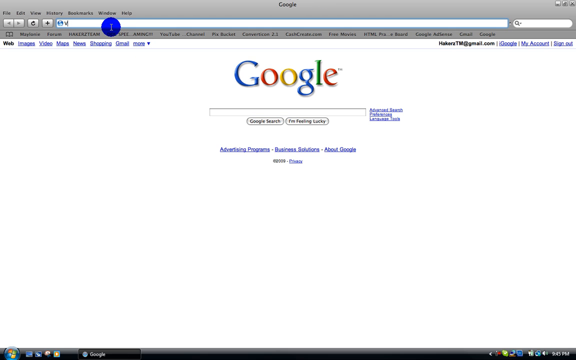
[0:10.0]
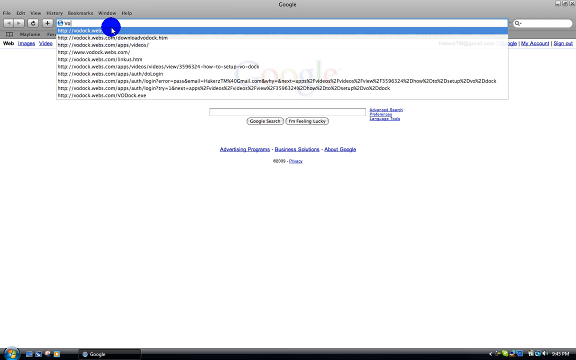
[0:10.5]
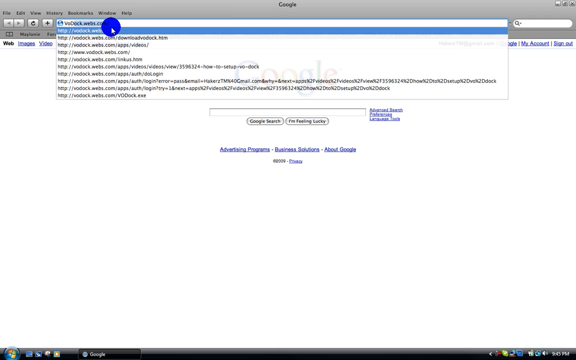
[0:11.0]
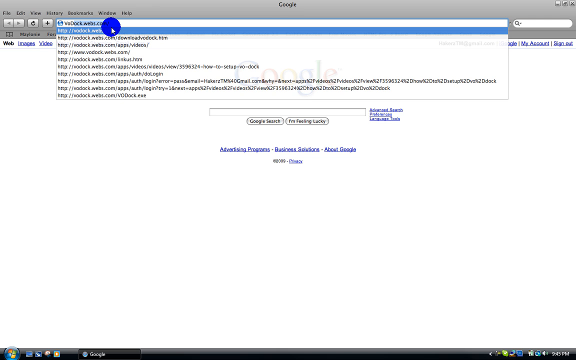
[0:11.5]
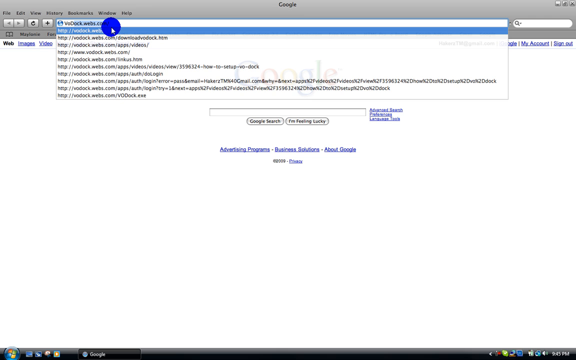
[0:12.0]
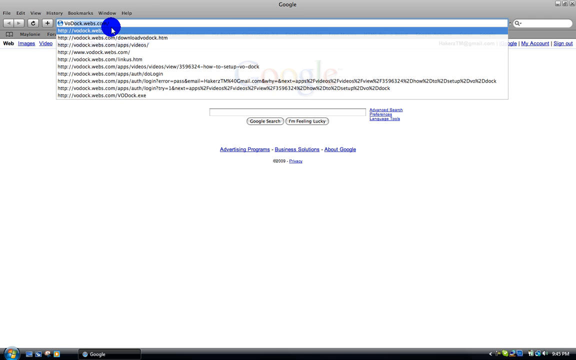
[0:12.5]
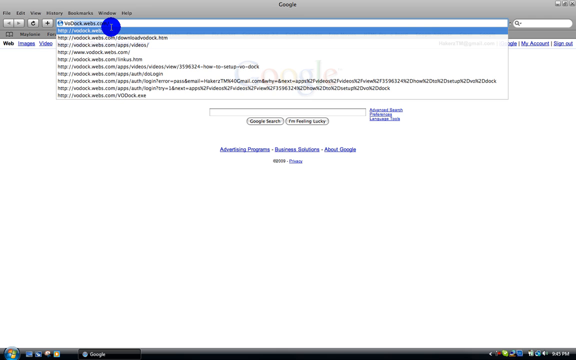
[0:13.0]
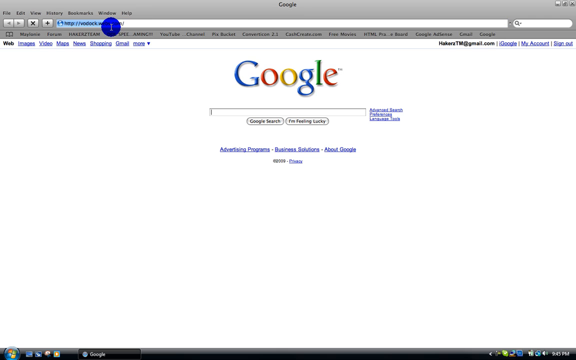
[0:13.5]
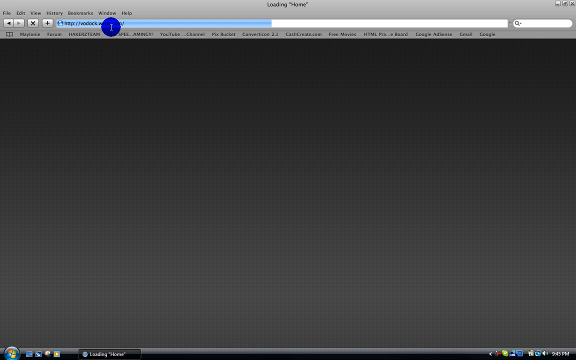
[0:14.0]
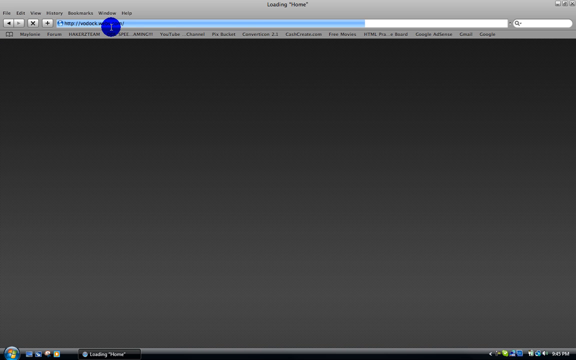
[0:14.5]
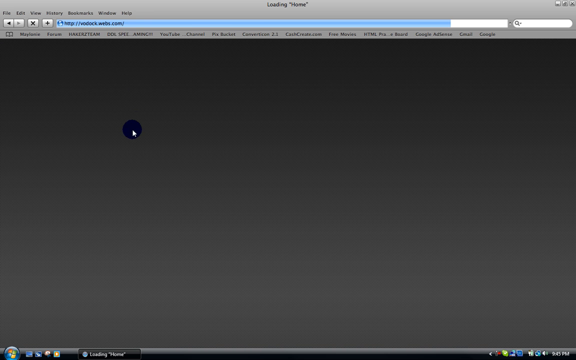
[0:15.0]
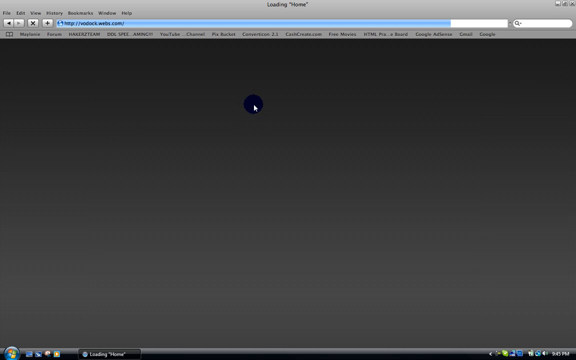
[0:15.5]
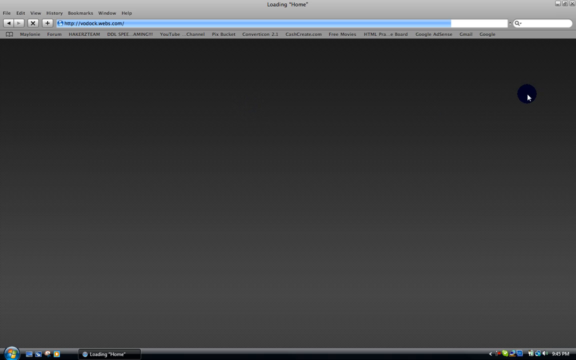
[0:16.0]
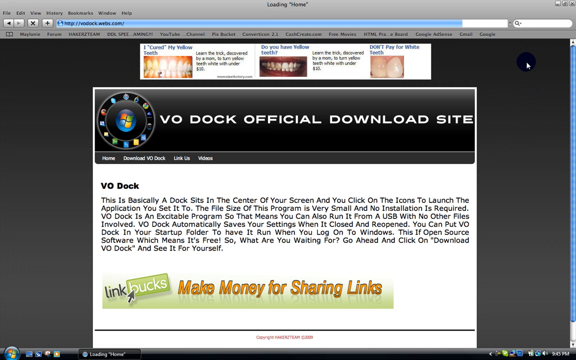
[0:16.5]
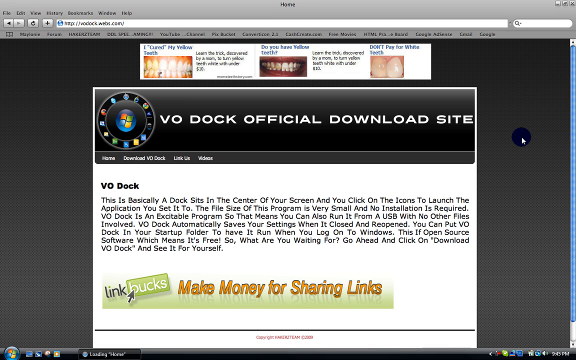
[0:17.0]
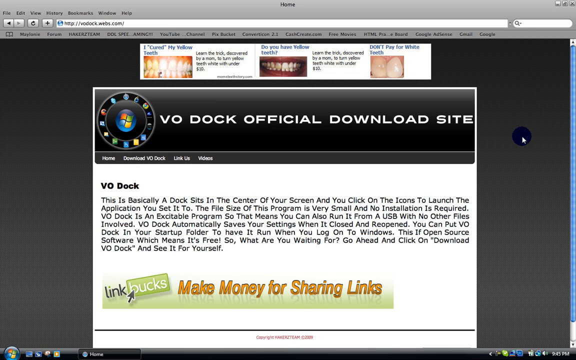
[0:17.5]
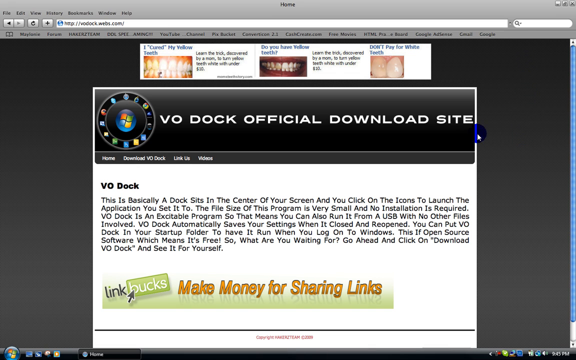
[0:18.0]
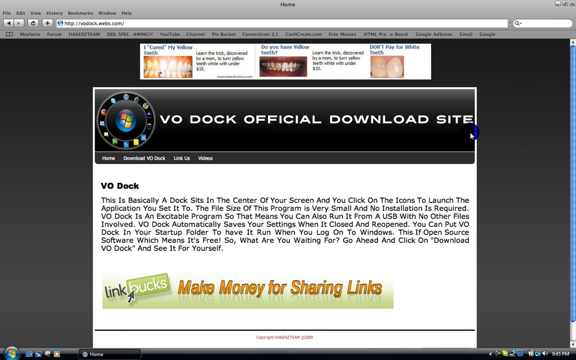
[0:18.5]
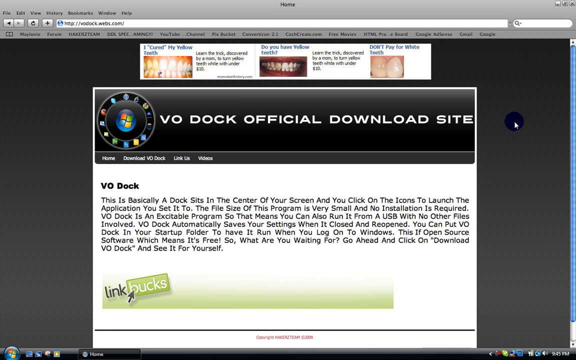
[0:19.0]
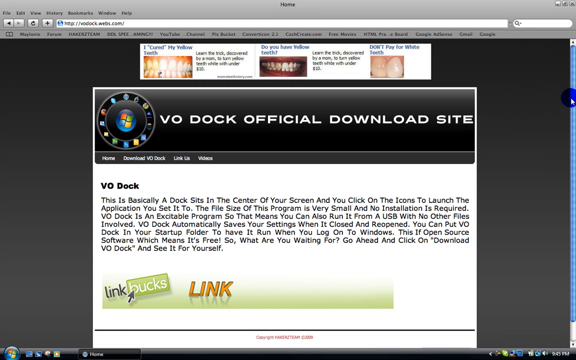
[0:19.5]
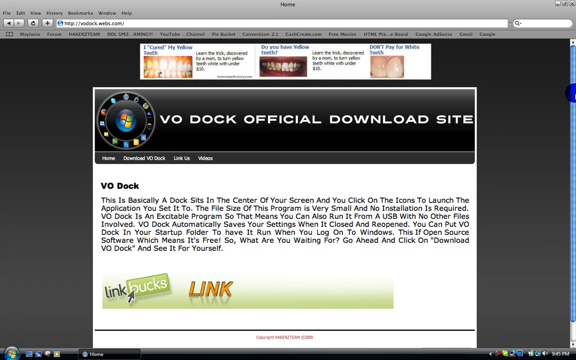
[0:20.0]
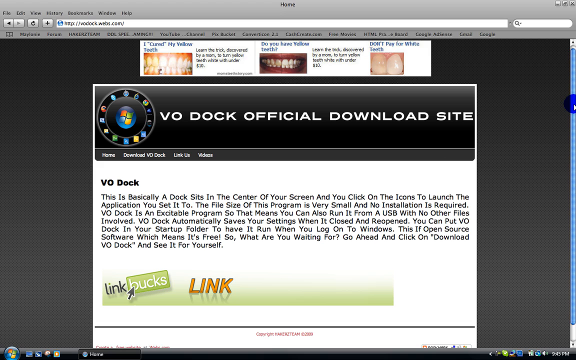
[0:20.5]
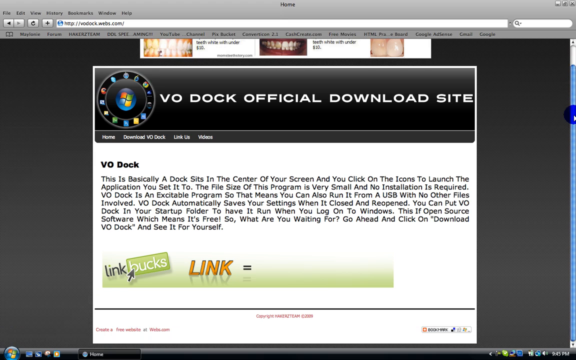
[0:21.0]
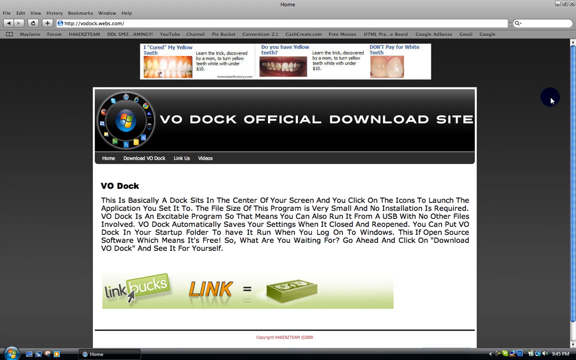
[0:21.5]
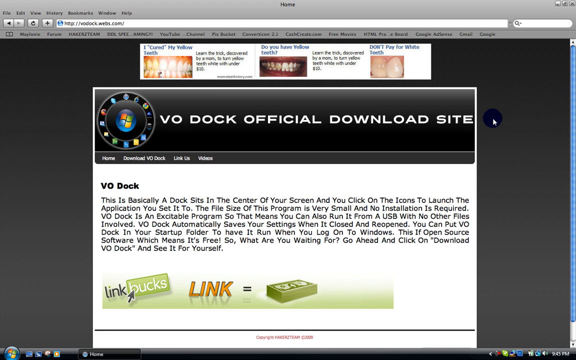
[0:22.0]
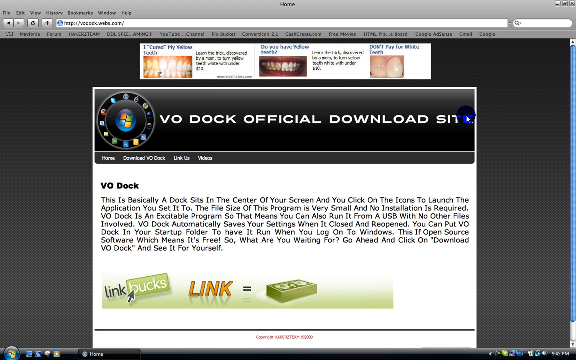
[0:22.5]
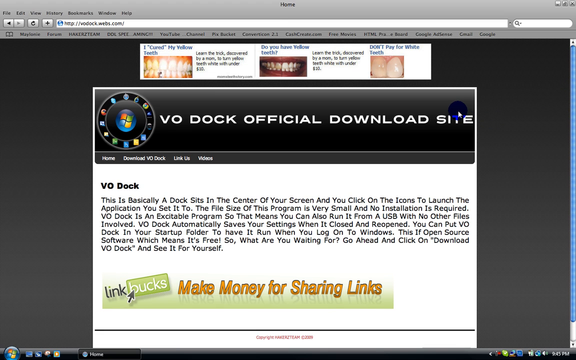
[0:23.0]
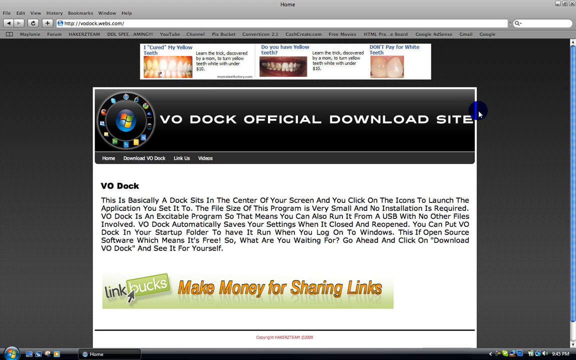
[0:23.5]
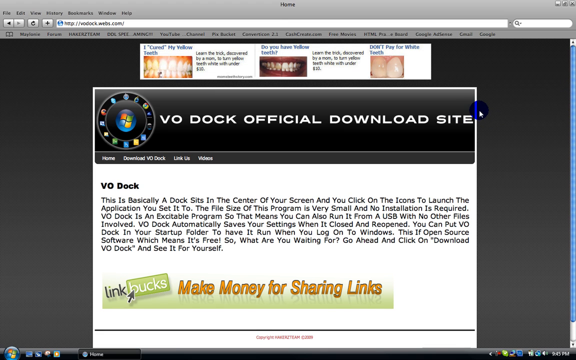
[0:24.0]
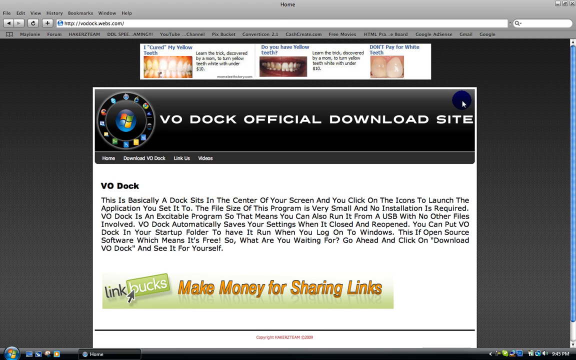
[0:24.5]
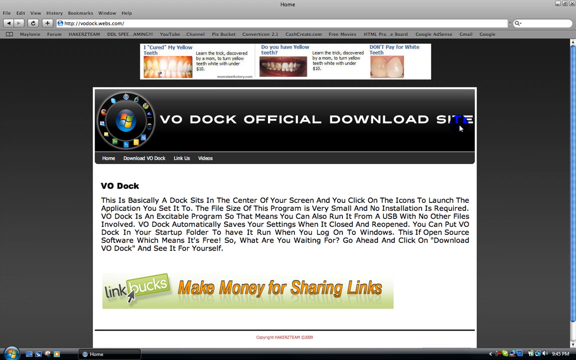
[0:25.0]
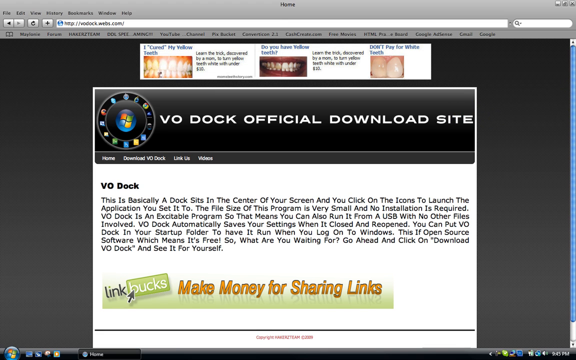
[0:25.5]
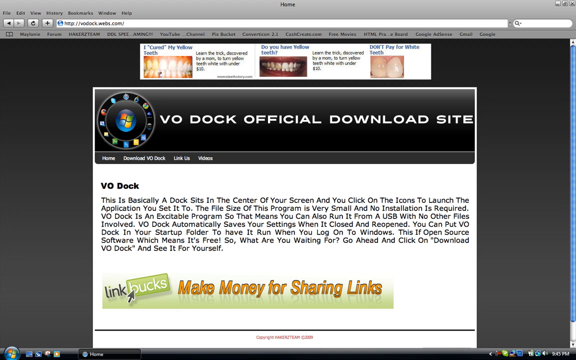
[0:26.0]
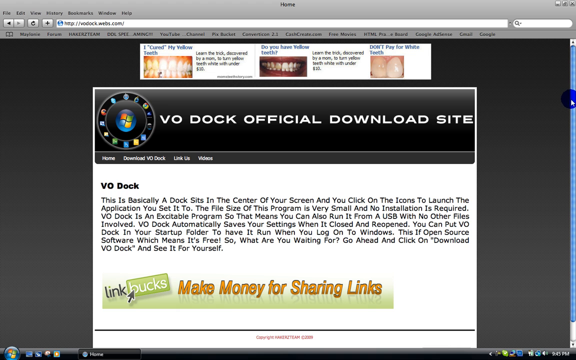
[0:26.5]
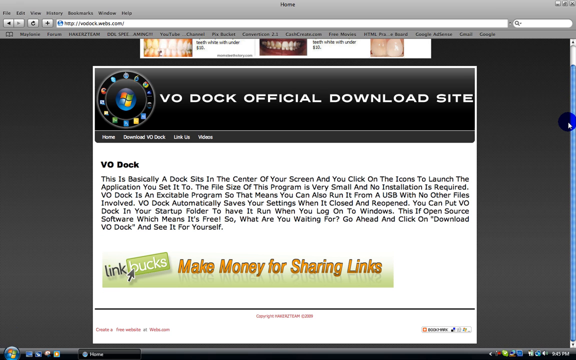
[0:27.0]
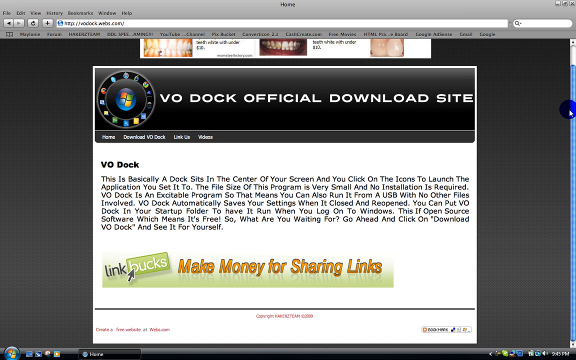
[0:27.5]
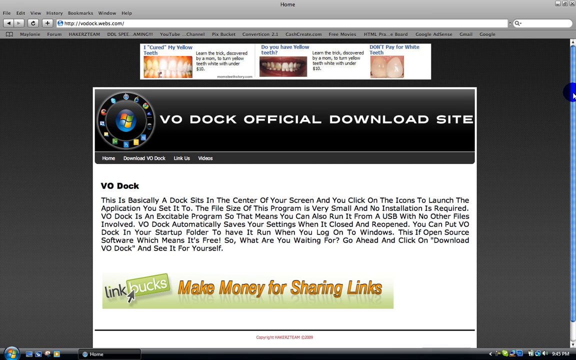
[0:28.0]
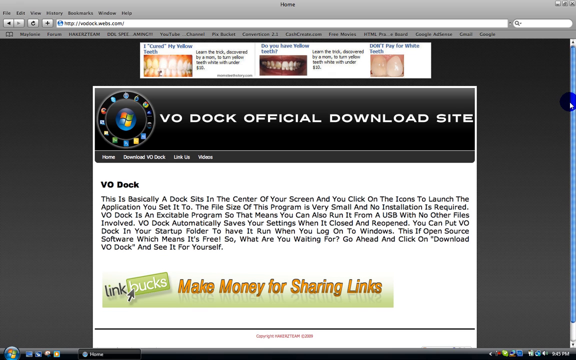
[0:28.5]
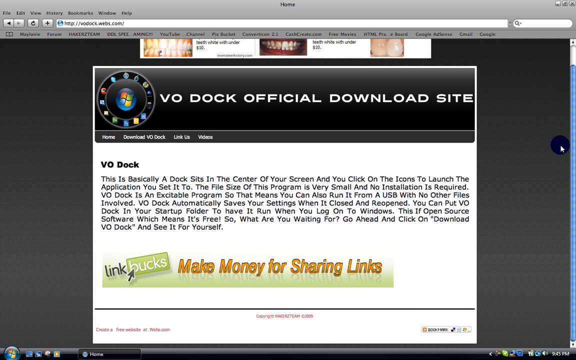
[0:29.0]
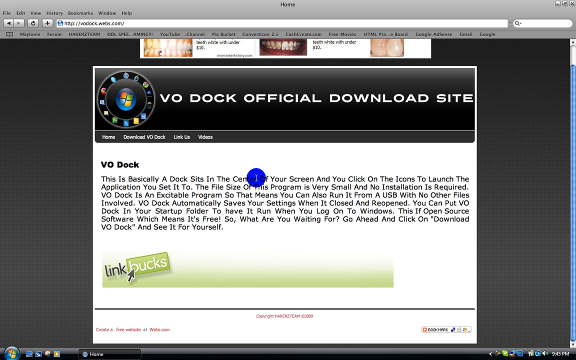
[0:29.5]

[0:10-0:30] Safari is open on the laptop screen with Google loaded. The vo dock website's name is searched in the URL bar and entered, and the website starts to load, indicated by a light blue loading bar over the URL bar. The pointer is placed at the top right of the black screen. The VO Dock official download site opens, with advertisements related to teeth brightening above it. "VO DOCK official download site" is written in white capitals, with a Windows icon surrounded by various apps to its left. Below it is a paragraph explaining what the VO Dock site is about, and below that, "Make money for sharing links" appears on a pista green background in orange text with shadows below. To its left is "linkbucks", with "buck" in white writing on a green box, and a black arrow points at the bucks box. The mouse pointer moves to the scroll bar on the right and the page is scrolled down and then up. The pointer then hovers over "download site" written at the top, goes back to the scroll bar, scrolls up and down, and then scrolls over the paragraph explaining what the site is about.